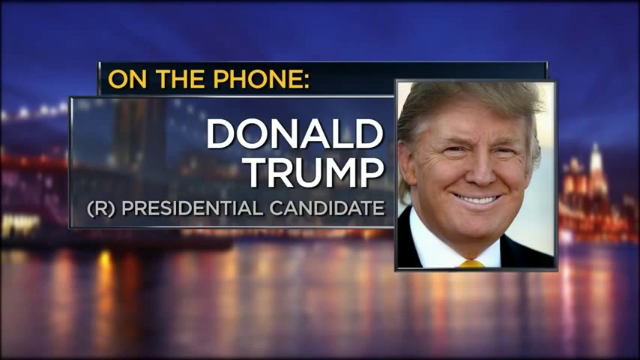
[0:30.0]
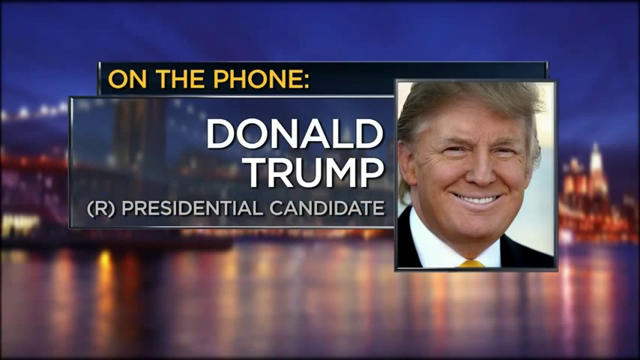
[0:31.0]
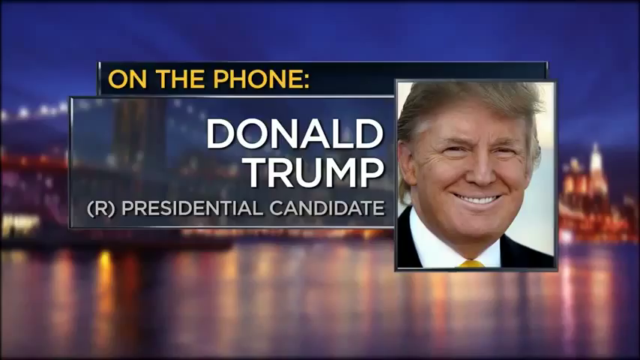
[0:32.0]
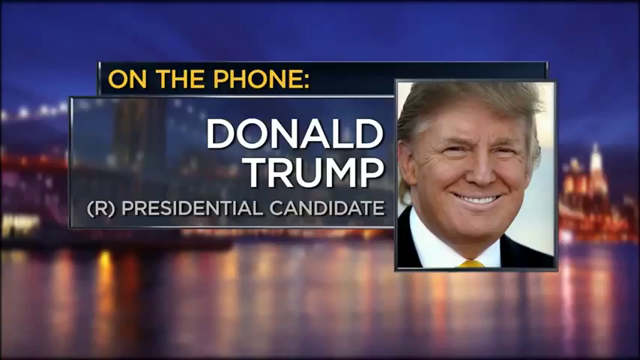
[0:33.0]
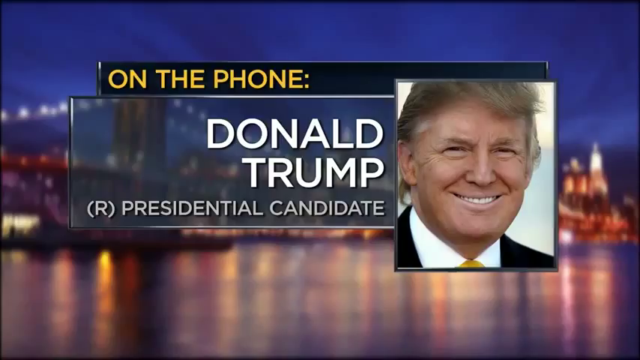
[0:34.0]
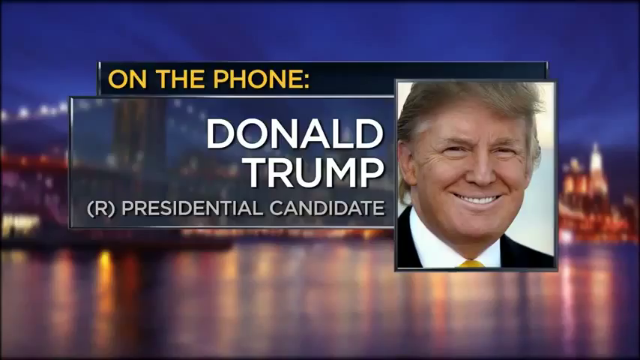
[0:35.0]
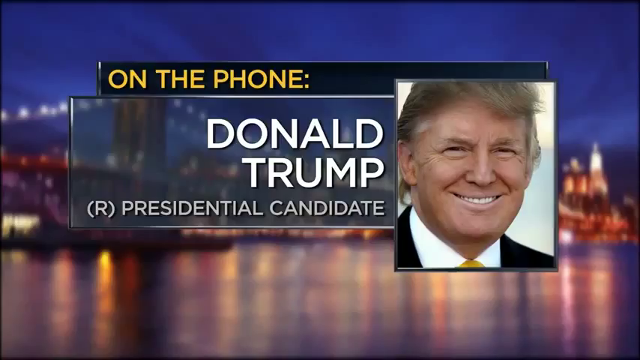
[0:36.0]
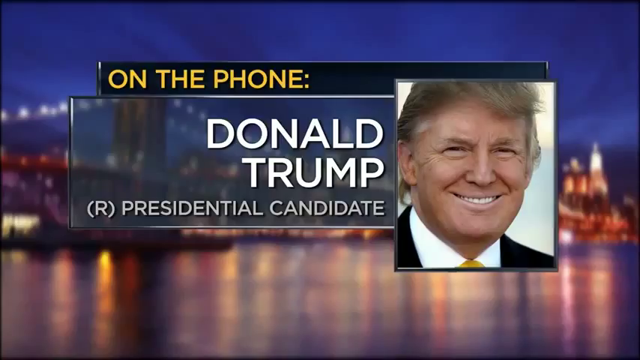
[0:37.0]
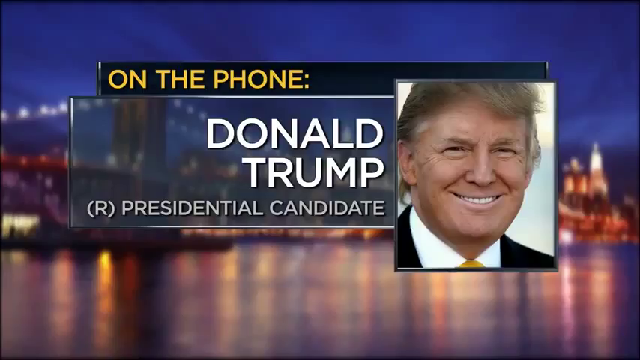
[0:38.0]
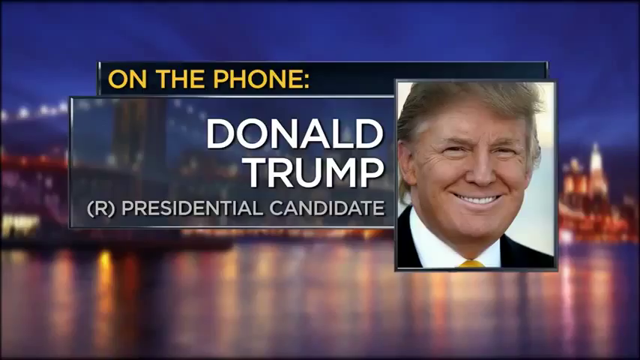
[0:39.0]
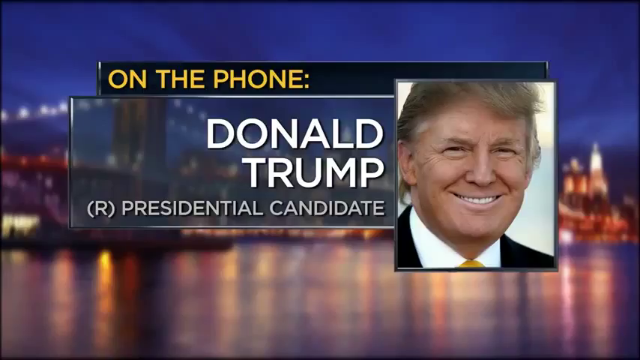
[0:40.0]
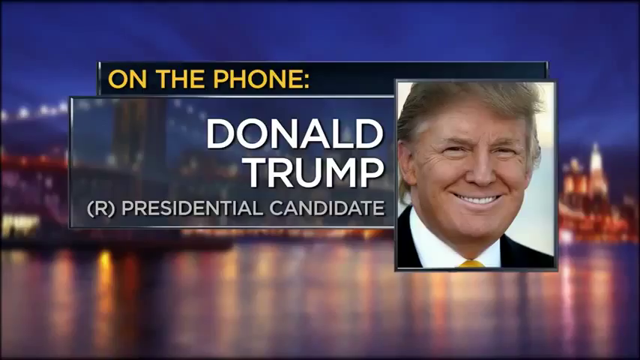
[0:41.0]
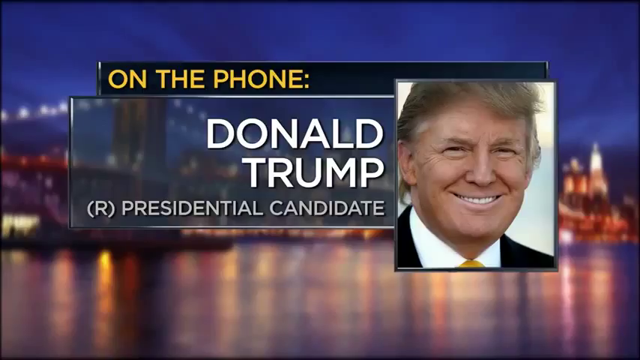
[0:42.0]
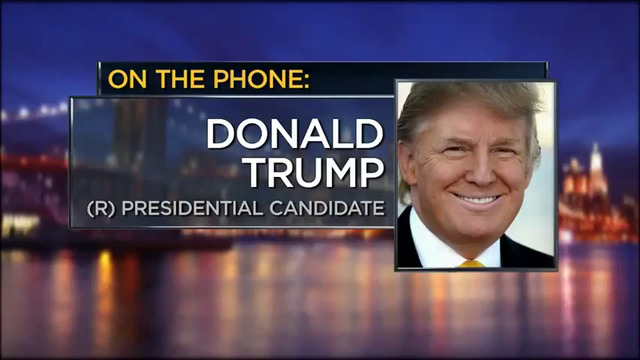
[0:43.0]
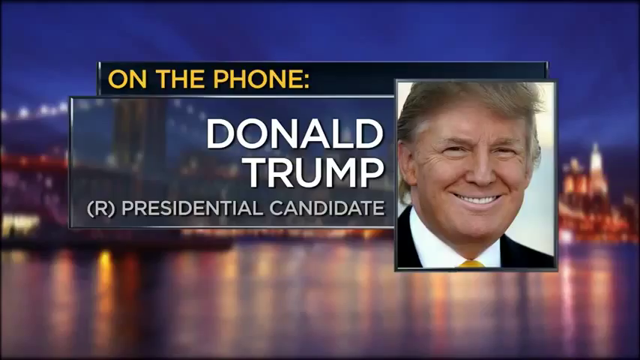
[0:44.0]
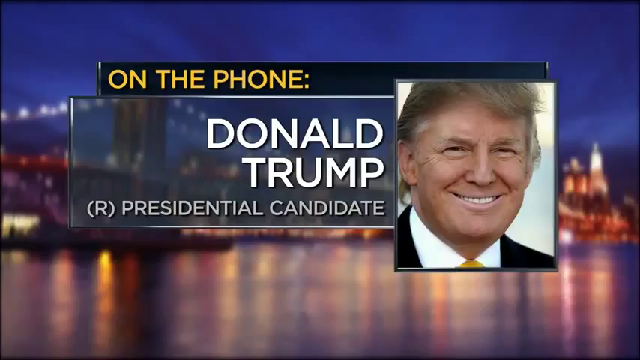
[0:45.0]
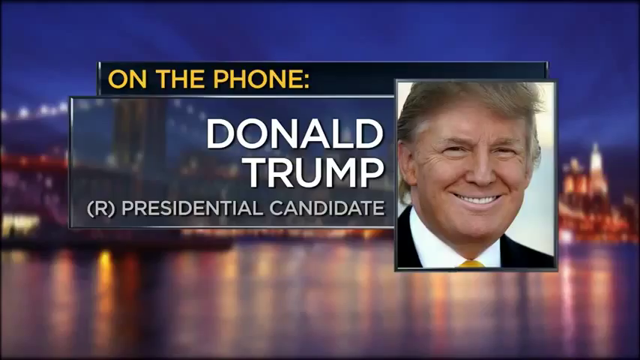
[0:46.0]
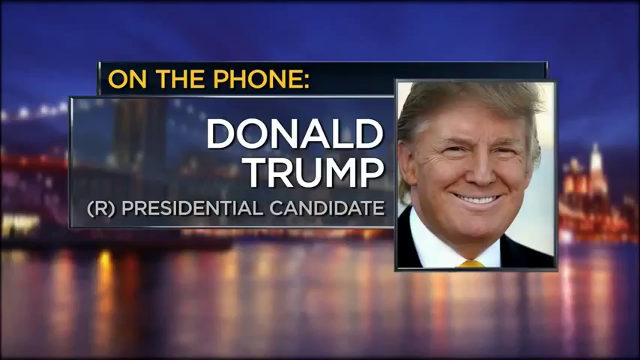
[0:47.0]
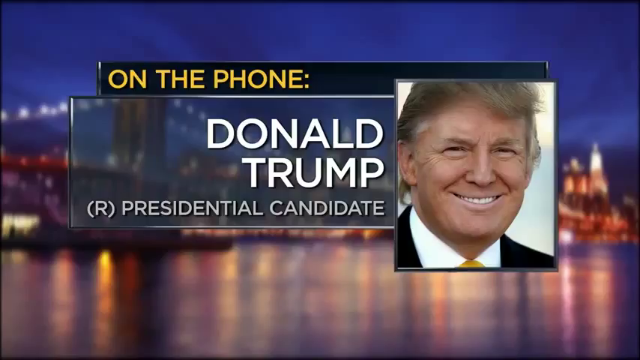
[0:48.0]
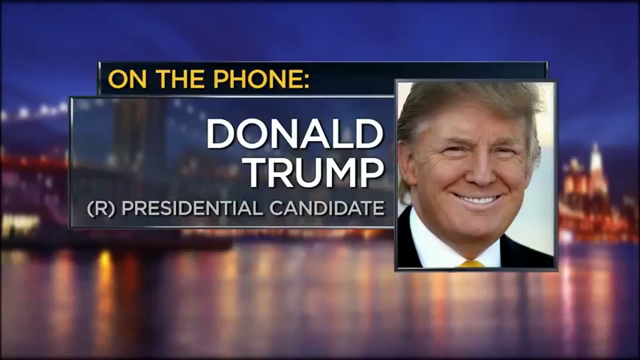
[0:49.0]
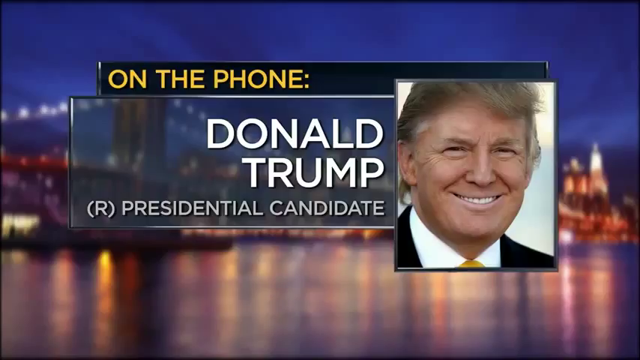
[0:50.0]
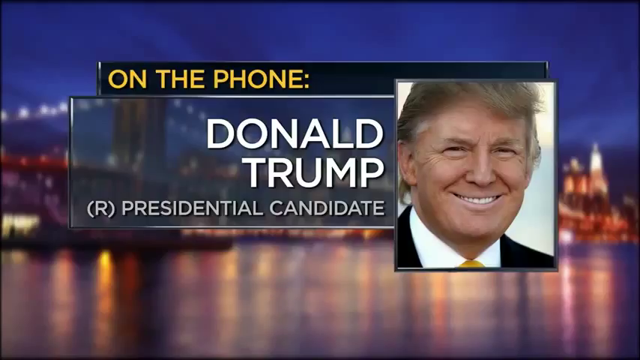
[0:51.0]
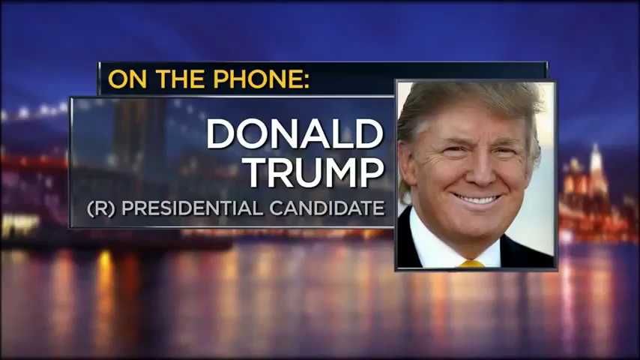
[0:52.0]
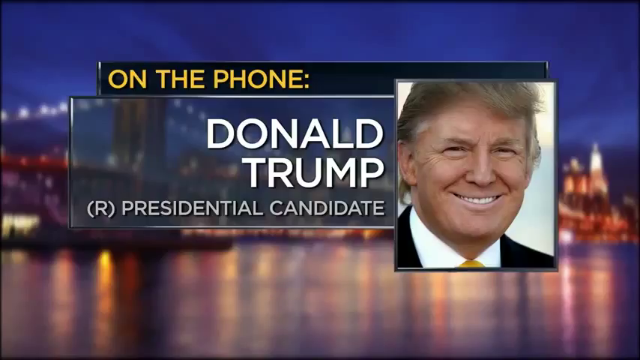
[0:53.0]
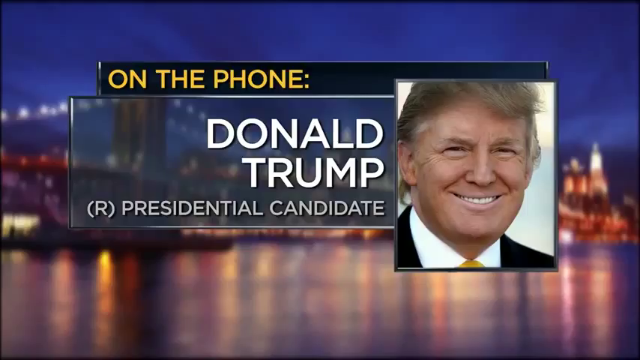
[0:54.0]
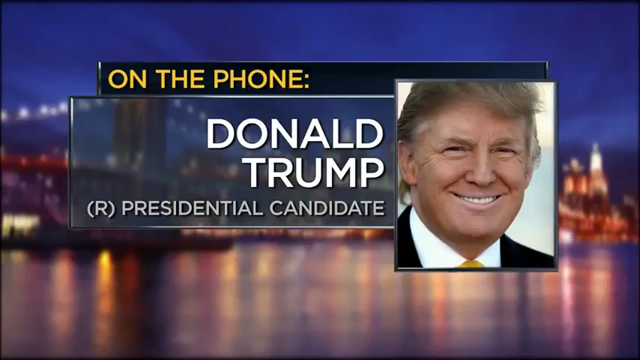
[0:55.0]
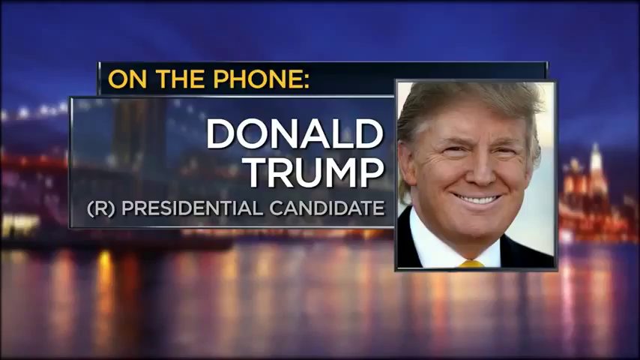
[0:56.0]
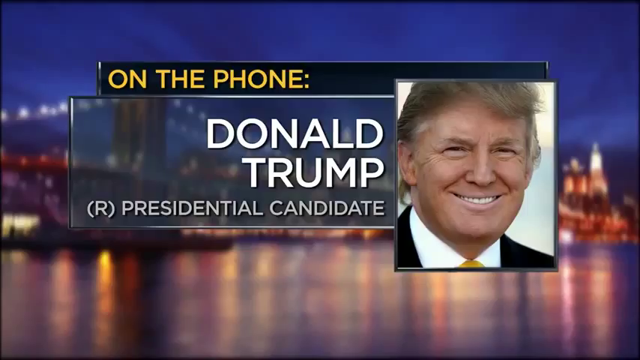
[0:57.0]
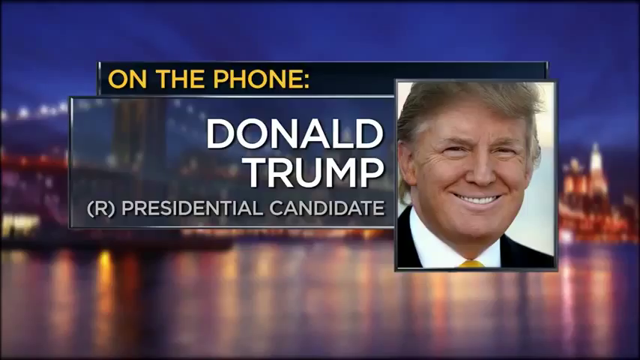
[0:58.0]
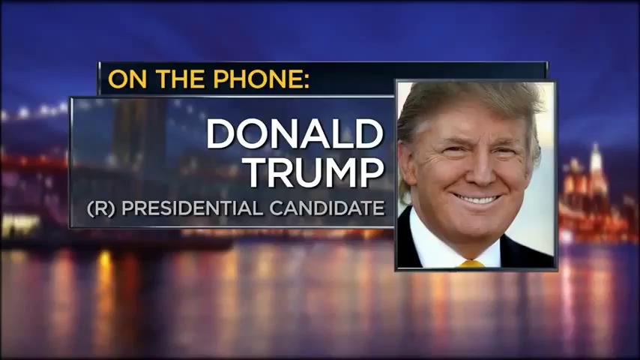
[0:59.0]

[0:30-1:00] The video switches to another still graphic with a blurry cityscape in the background. In the center is a black banner reading "on the phone" and beneath it "Donald Trump (R) presidential candidate," with a picture of Trump to the right. The photo looks younger; he wears a yellow tie, a white shirt, and a black jacket. His hair swoops down low and is combed back over on the left side. He is smiling so that only his upper teeth show. Nothing on the screen changes during this time, apparently to accompany a phone conversation between him and the news anchor. In the lower half of the background image is a waterway with the city's lights reflecting on it, giving the water a somewhat purple-pink color.